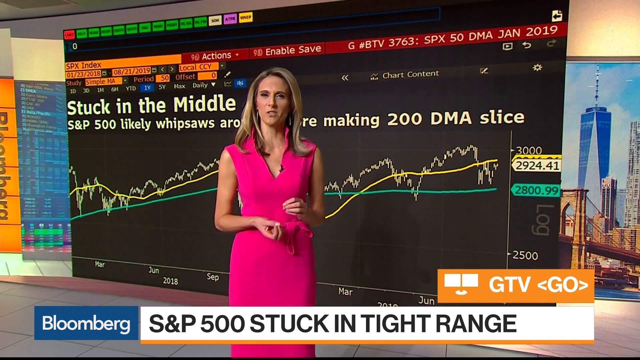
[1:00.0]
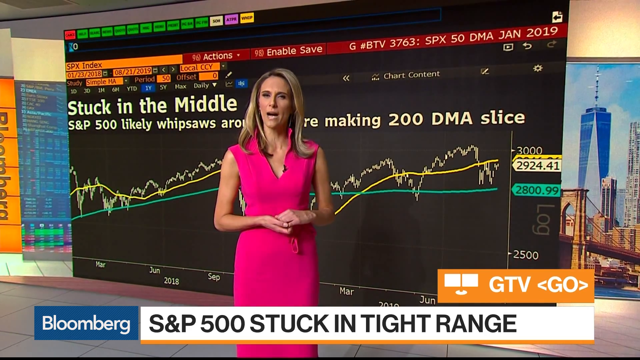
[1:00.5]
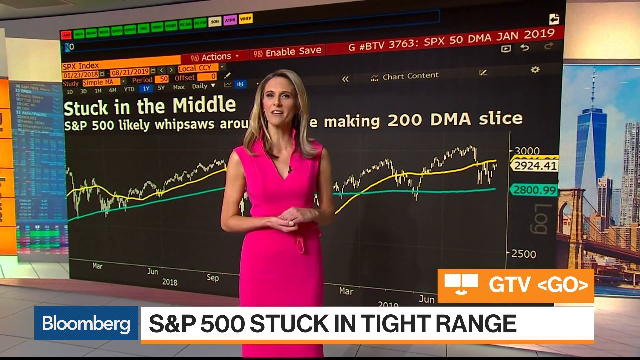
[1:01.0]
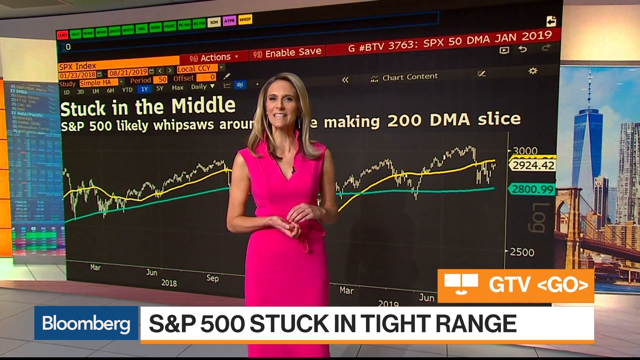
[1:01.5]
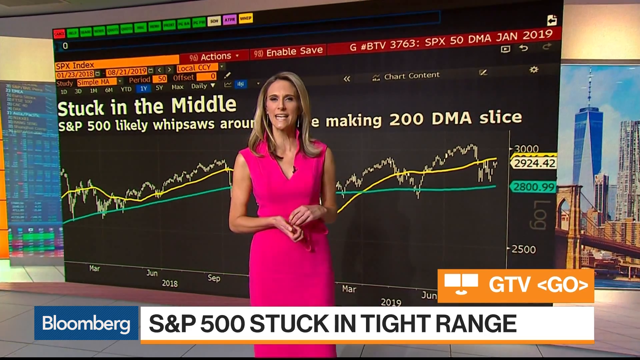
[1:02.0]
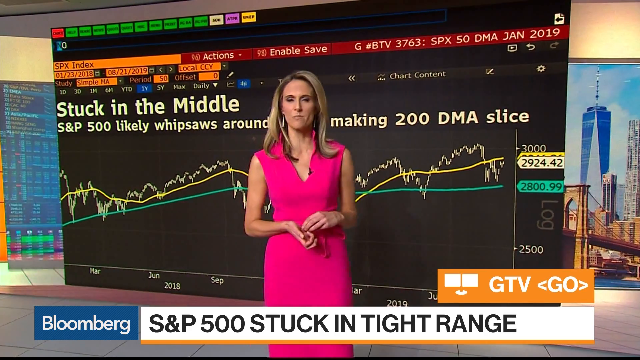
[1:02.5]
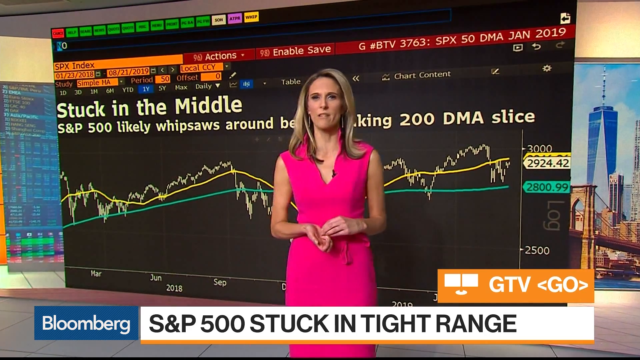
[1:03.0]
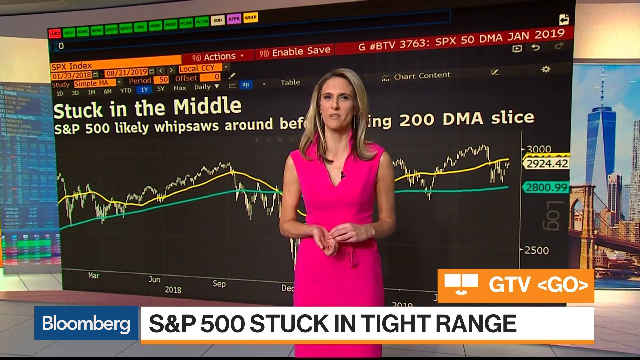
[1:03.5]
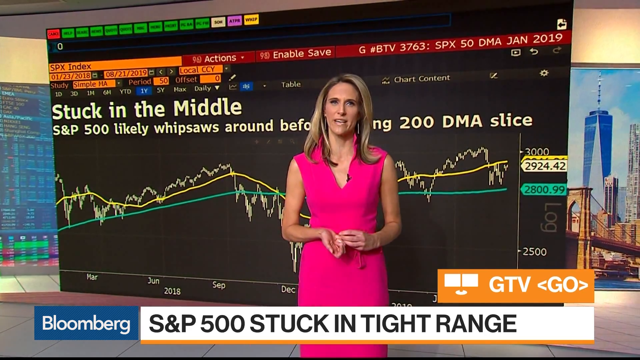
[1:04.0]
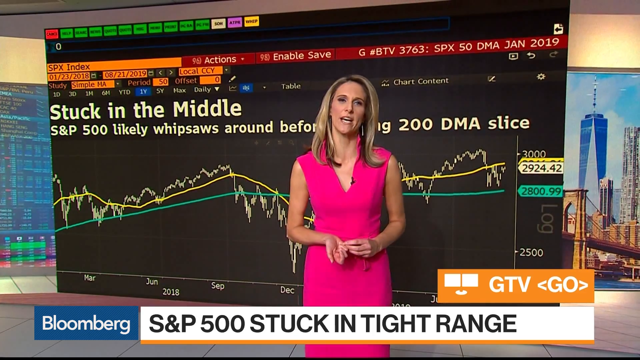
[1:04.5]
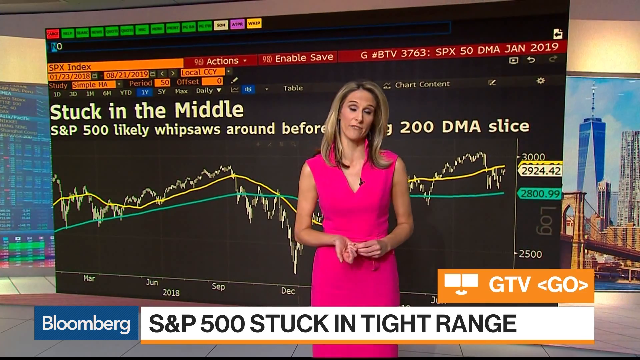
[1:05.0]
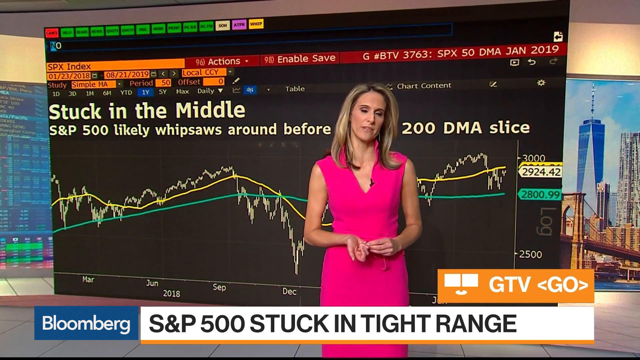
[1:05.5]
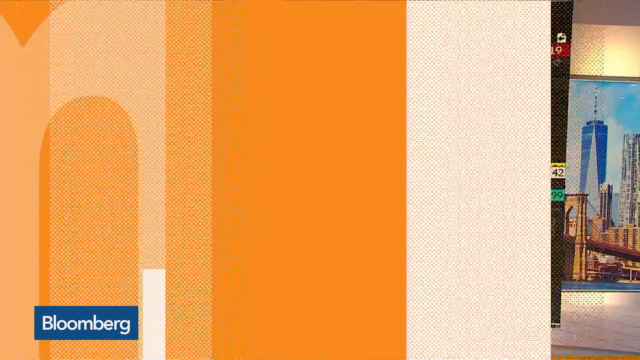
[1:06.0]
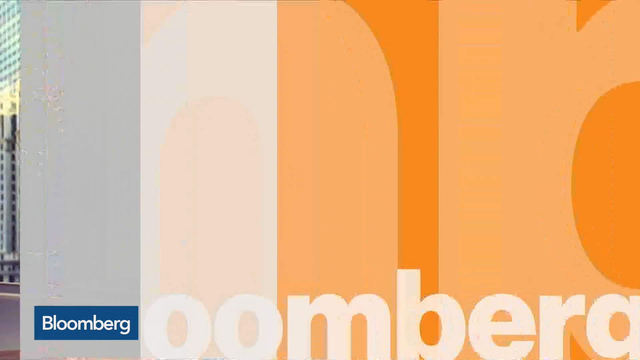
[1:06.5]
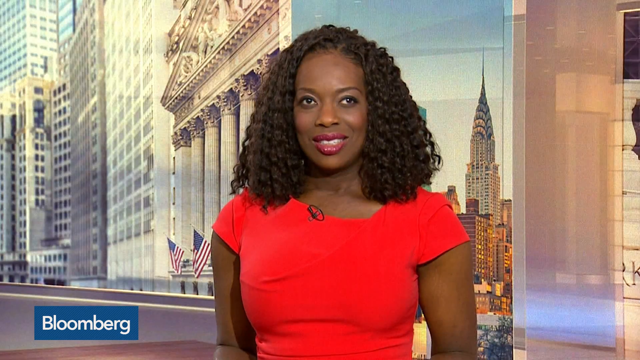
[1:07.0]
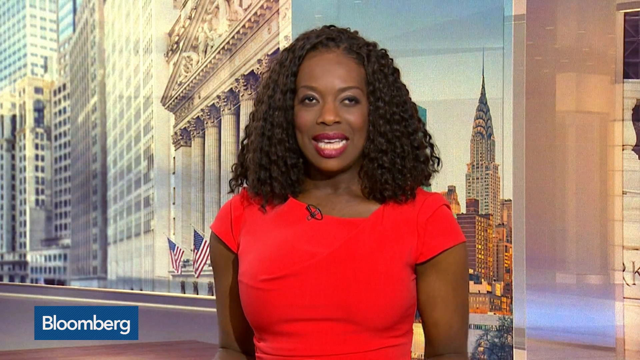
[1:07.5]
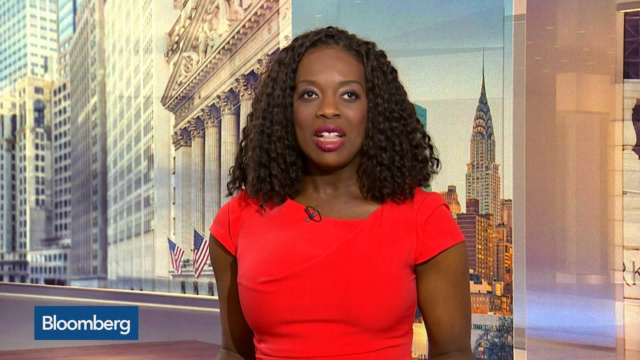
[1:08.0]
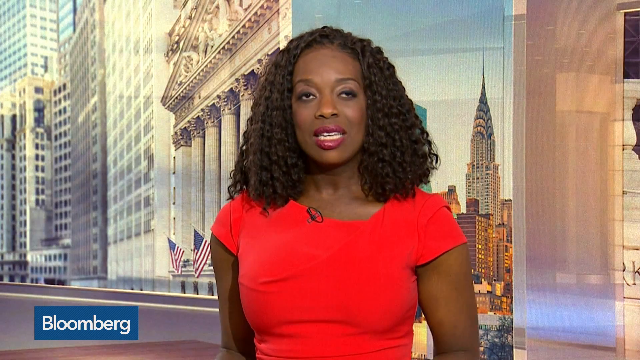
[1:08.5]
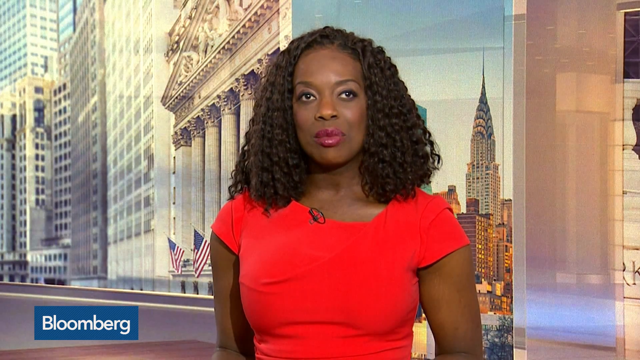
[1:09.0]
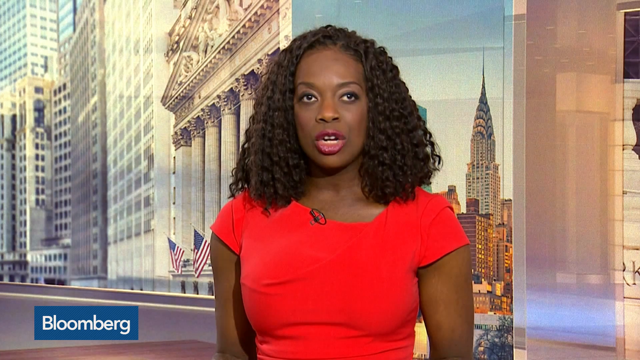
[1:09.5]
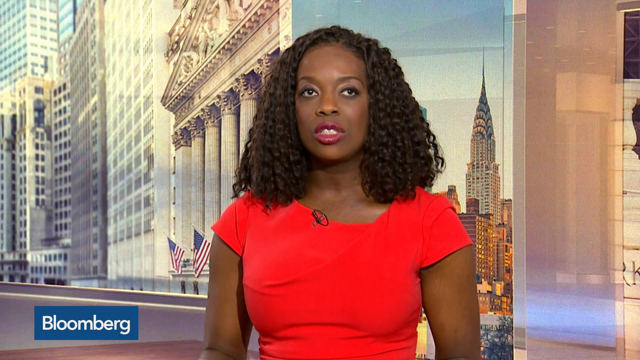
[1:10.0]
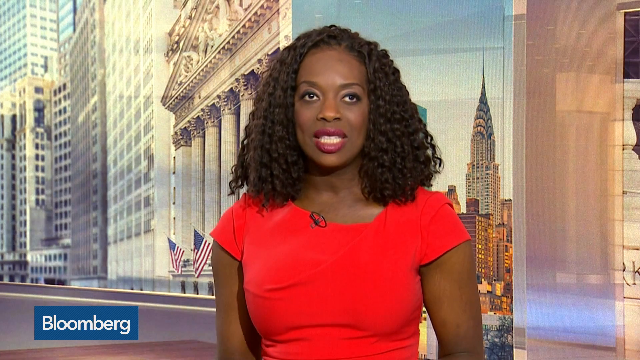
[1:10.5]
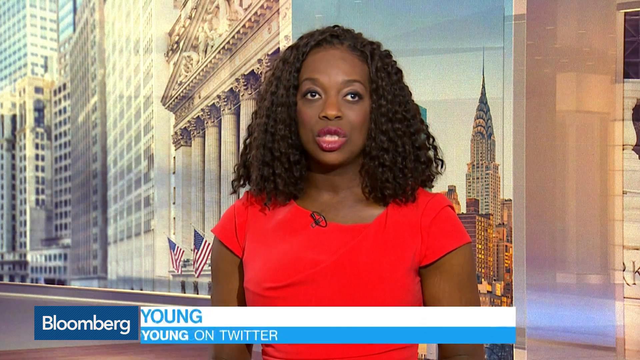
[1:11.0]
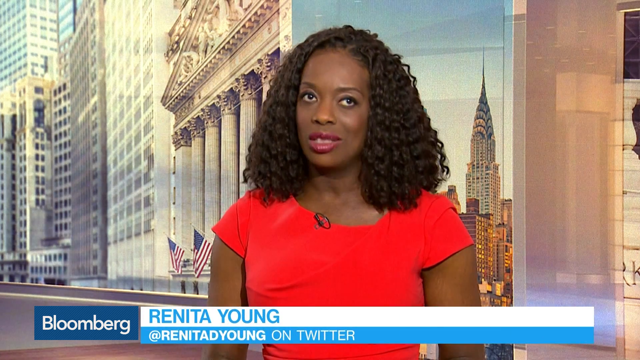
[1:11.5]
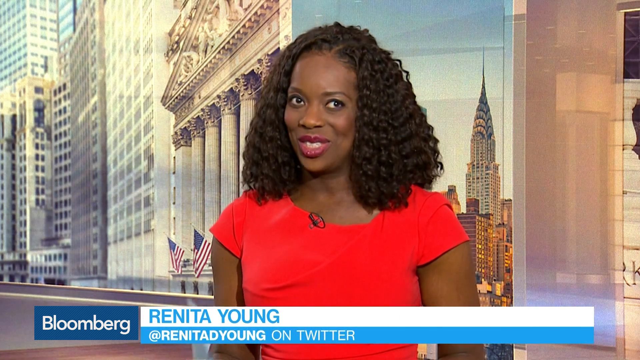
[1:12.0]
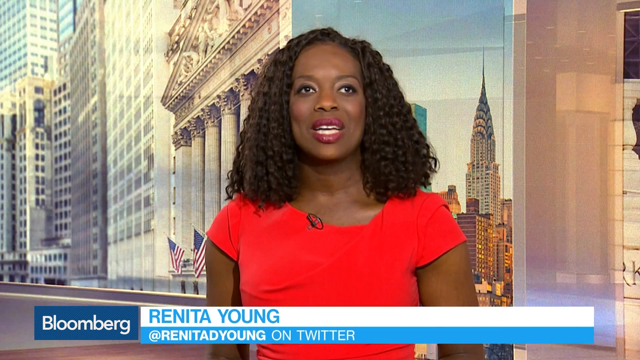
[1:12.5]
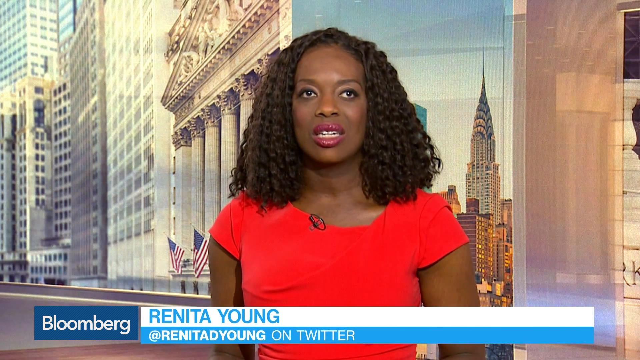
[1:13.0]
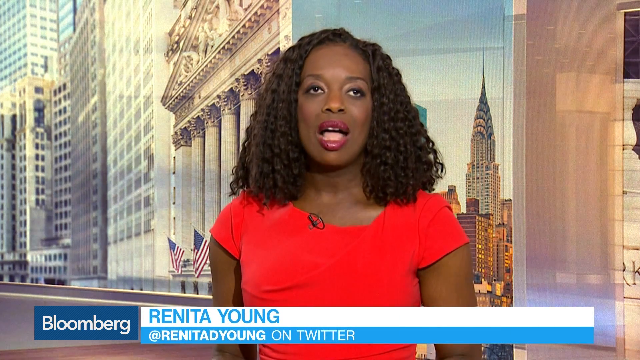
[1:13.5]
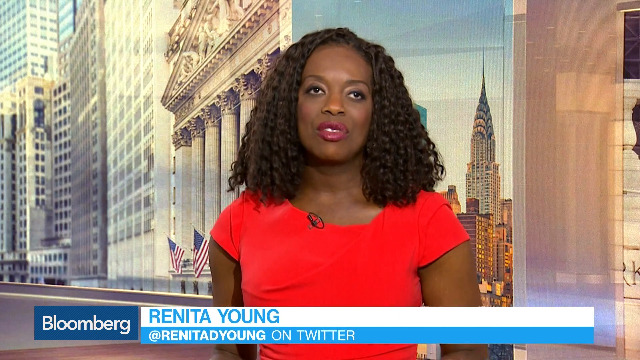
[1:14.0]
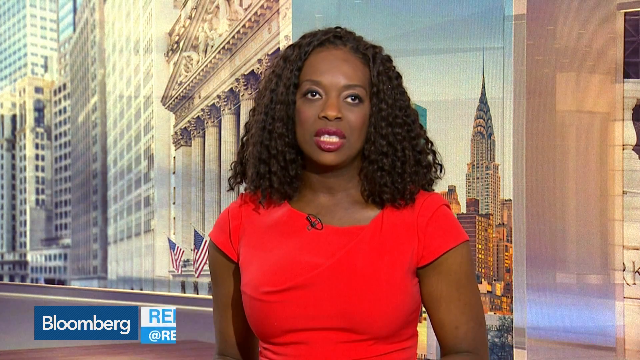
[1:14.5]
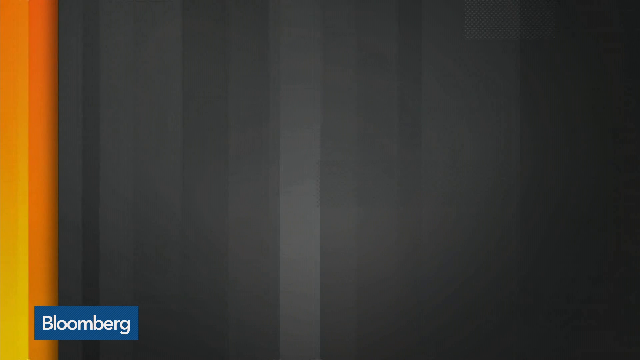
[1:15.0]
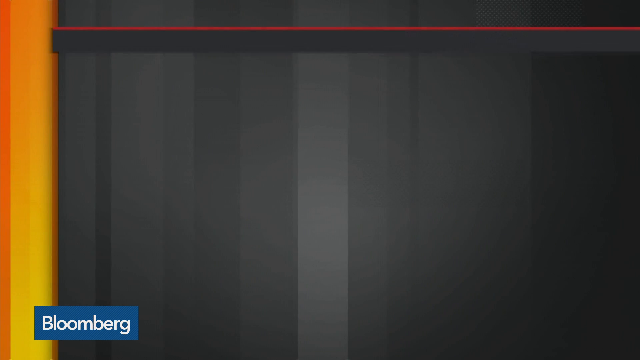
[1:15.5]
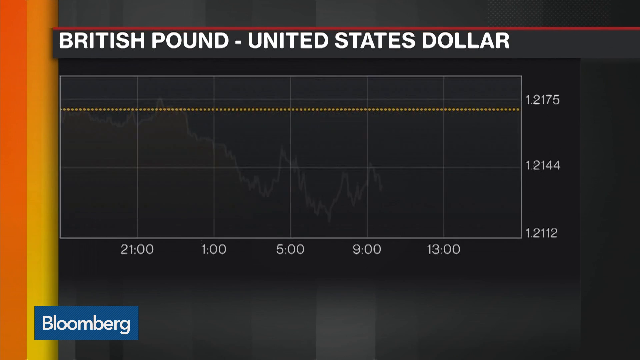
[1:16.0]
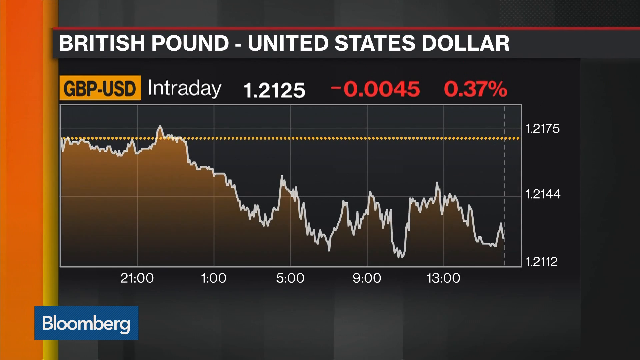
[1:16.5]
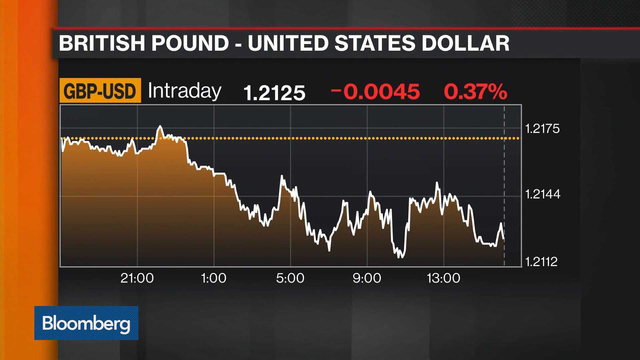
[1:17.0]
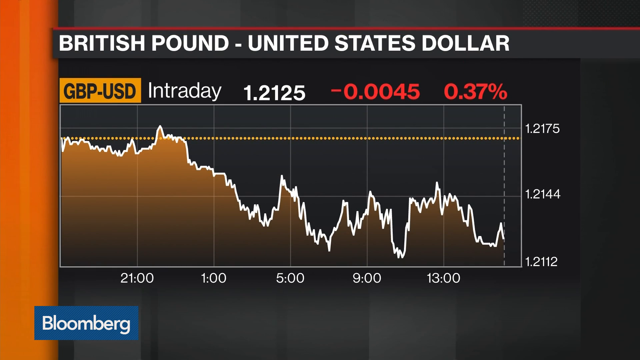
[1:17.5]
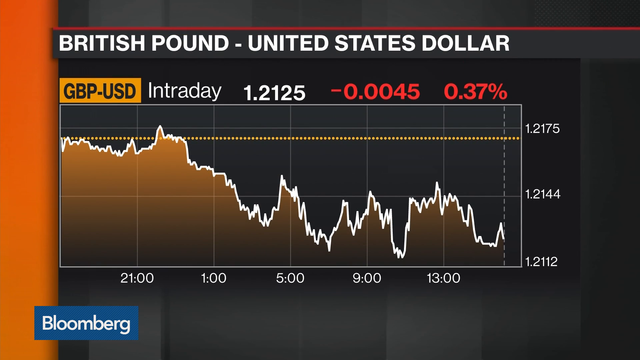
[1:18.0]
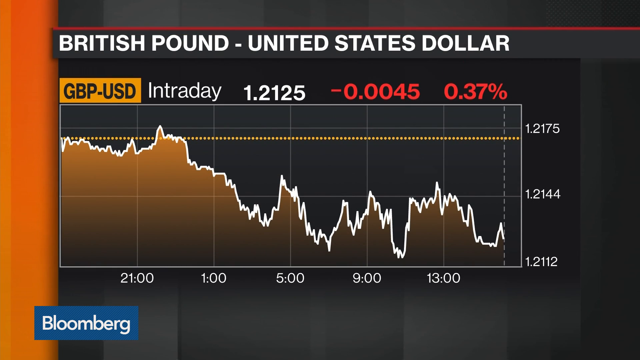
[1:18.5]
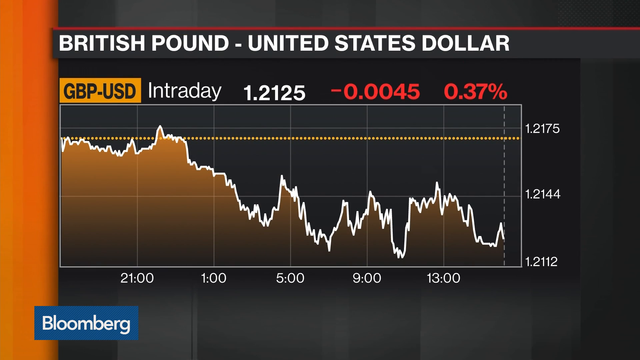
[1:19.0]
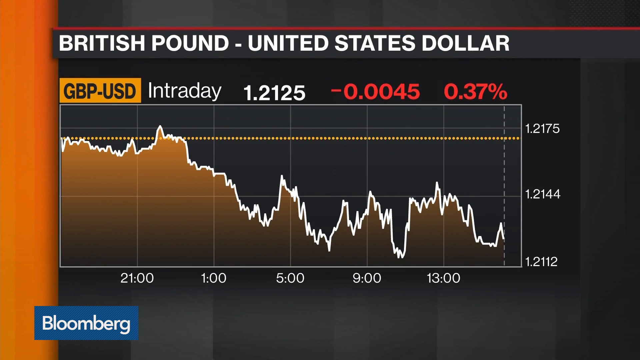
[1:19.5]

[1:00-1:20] A new reporter appears, and a headline about the stock is on screen.